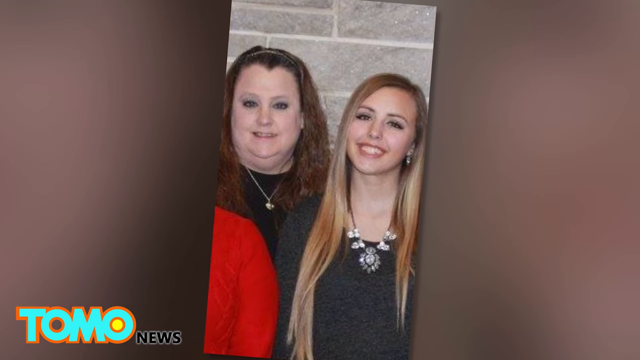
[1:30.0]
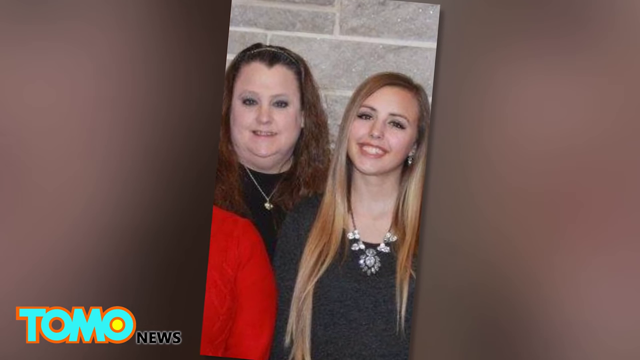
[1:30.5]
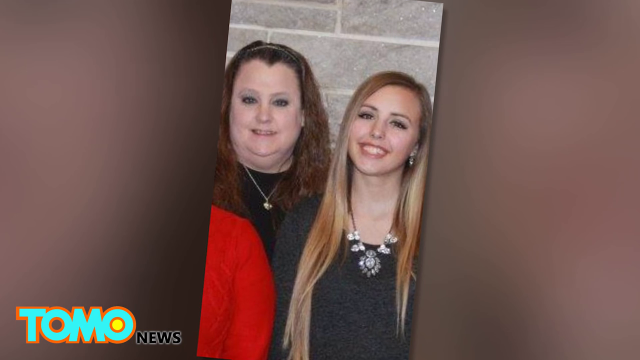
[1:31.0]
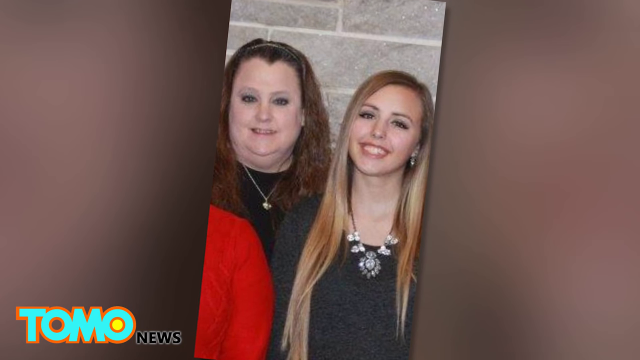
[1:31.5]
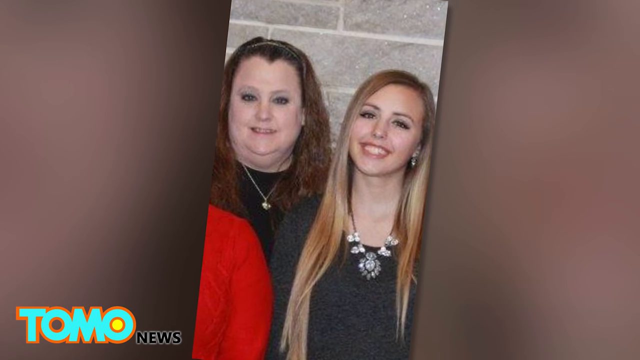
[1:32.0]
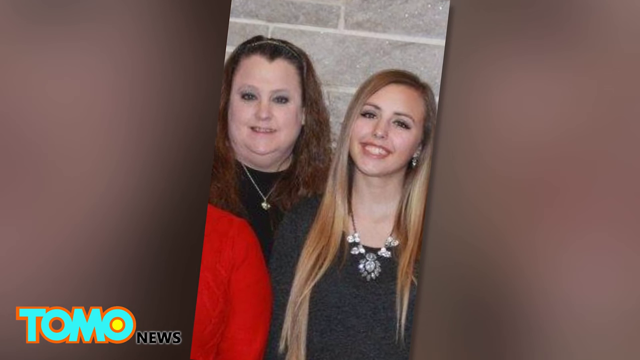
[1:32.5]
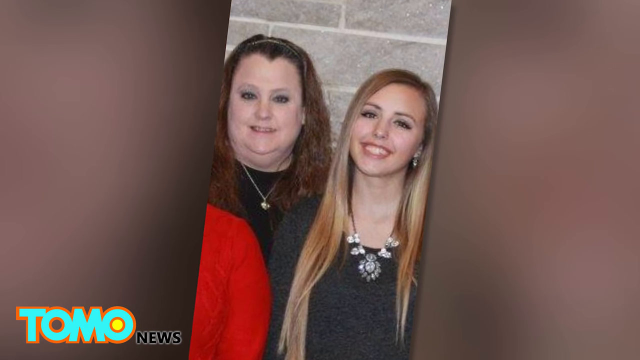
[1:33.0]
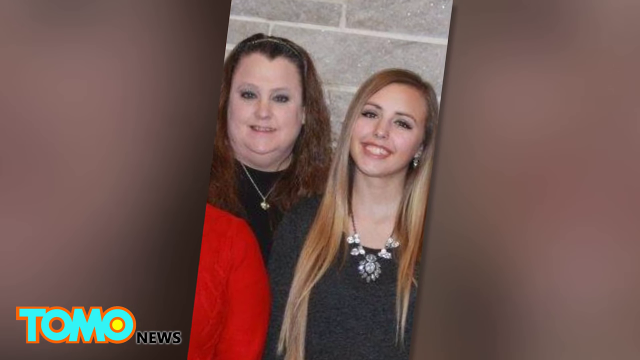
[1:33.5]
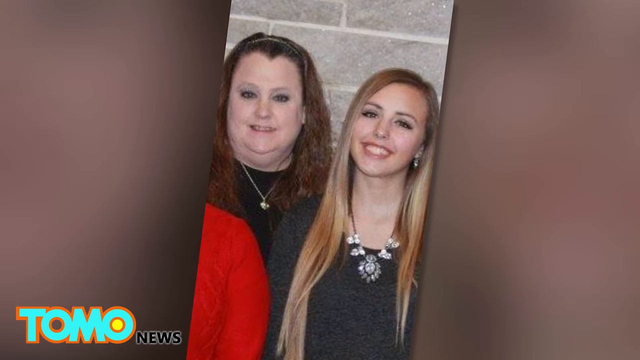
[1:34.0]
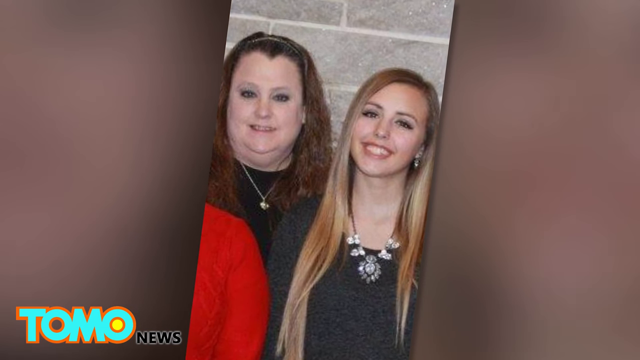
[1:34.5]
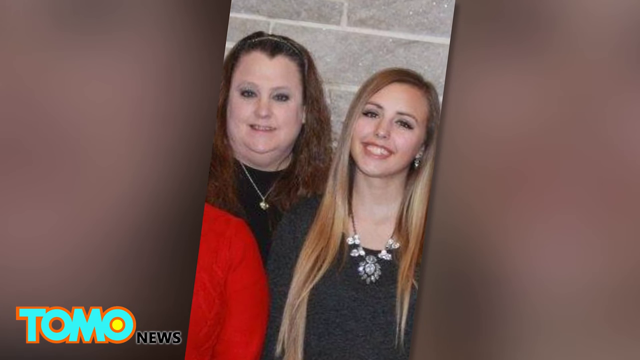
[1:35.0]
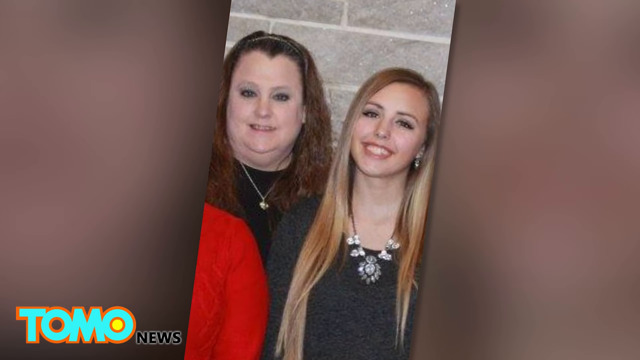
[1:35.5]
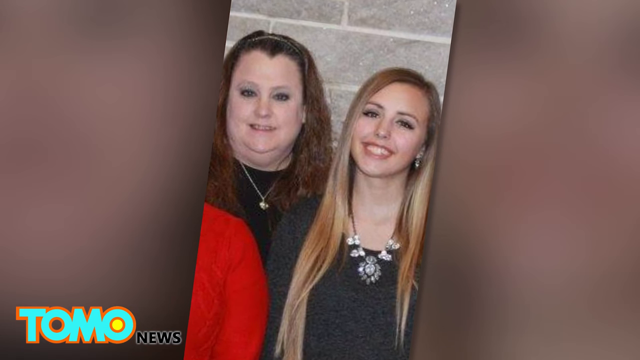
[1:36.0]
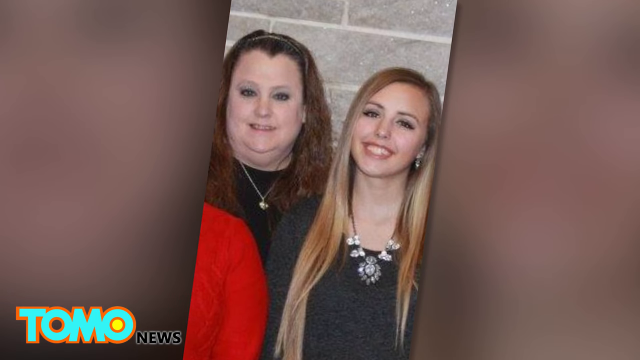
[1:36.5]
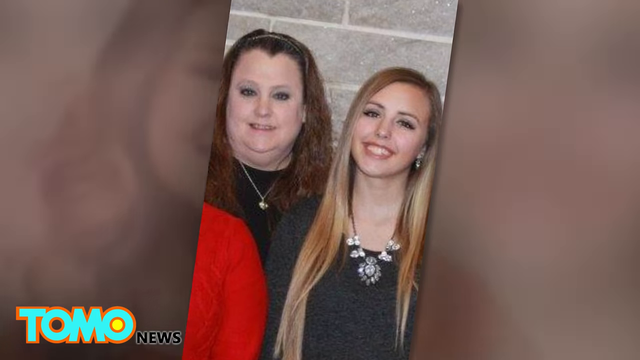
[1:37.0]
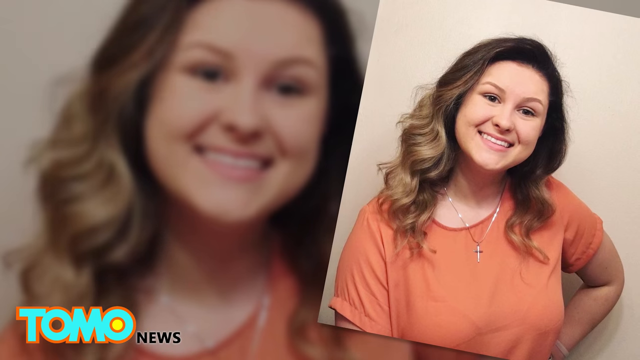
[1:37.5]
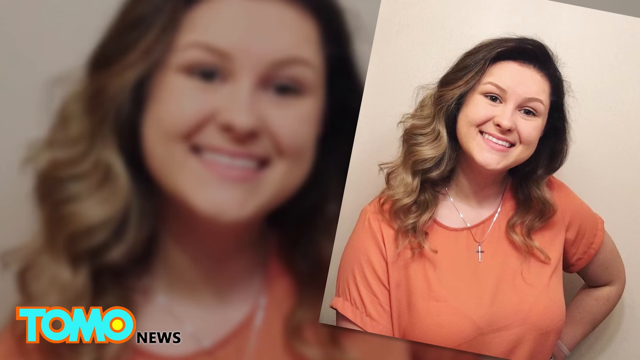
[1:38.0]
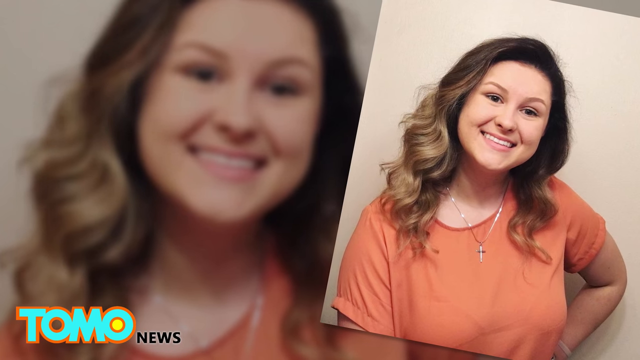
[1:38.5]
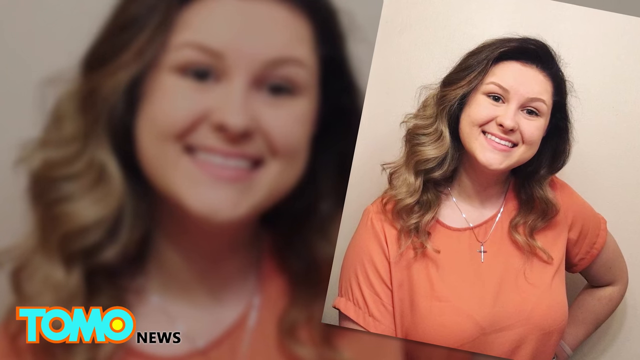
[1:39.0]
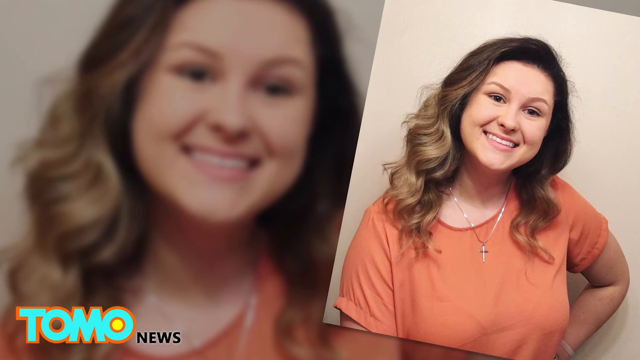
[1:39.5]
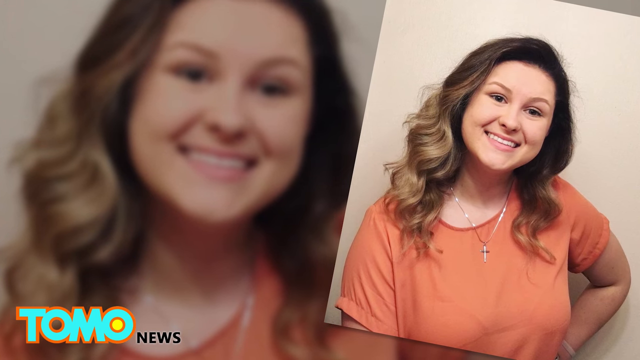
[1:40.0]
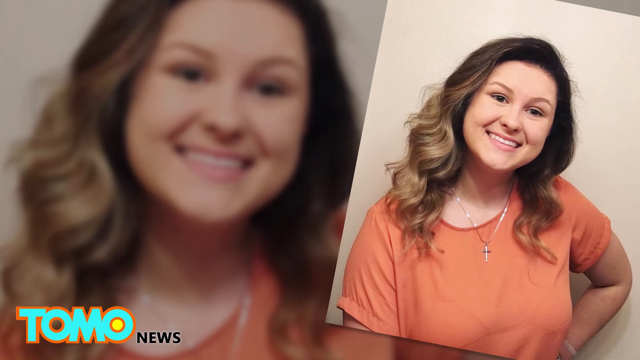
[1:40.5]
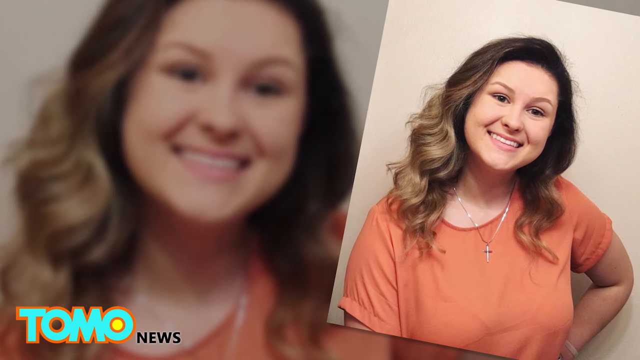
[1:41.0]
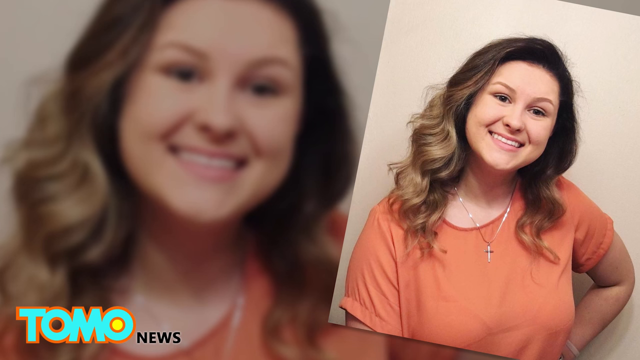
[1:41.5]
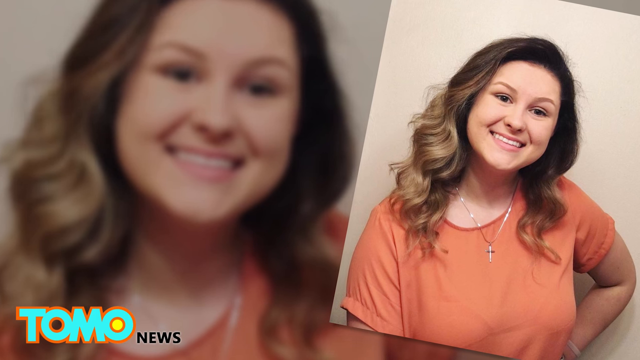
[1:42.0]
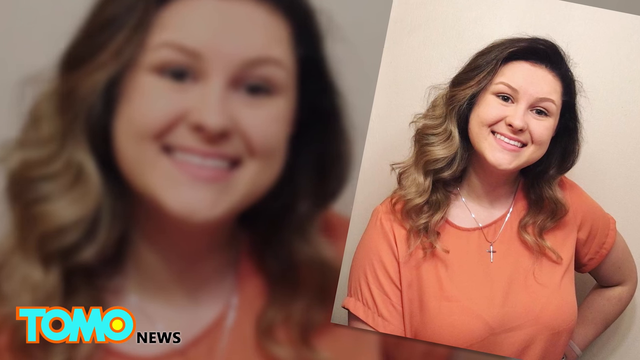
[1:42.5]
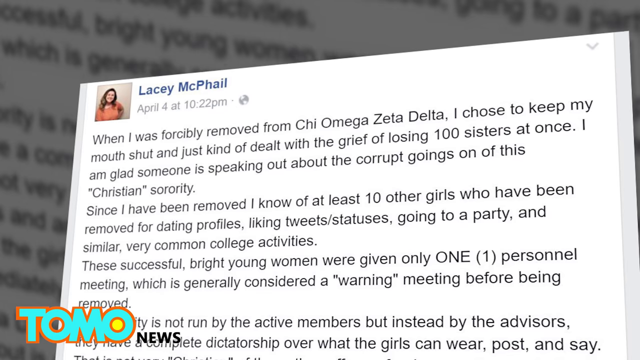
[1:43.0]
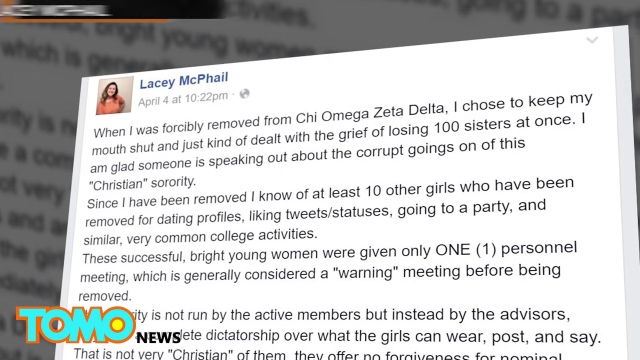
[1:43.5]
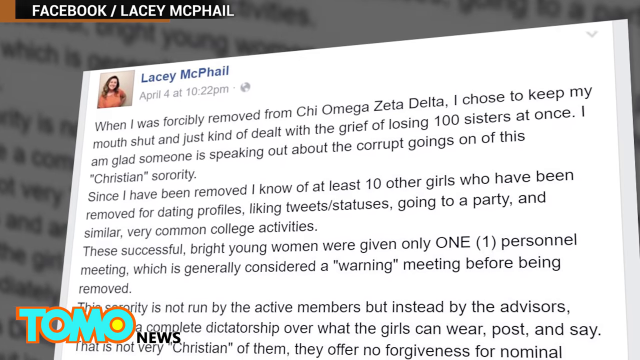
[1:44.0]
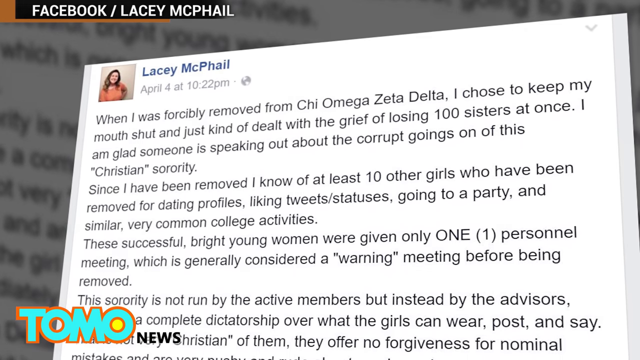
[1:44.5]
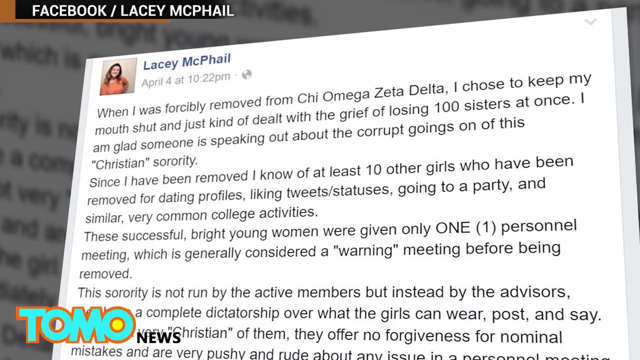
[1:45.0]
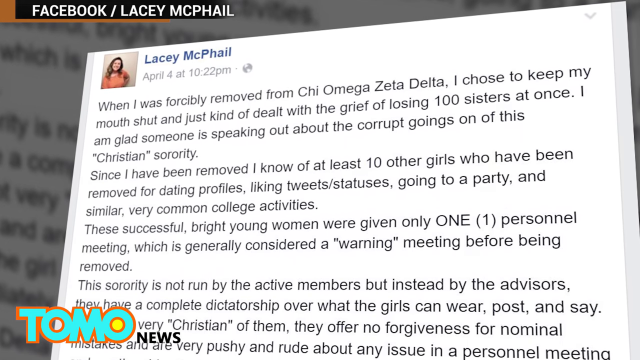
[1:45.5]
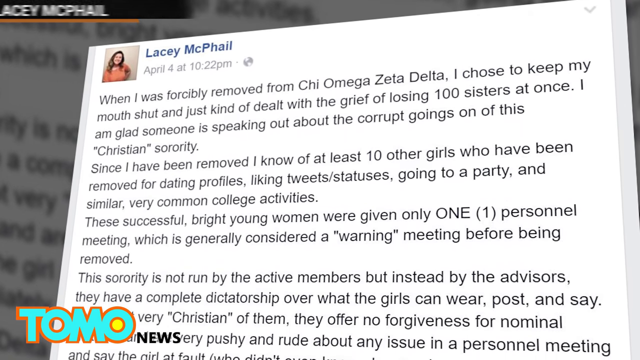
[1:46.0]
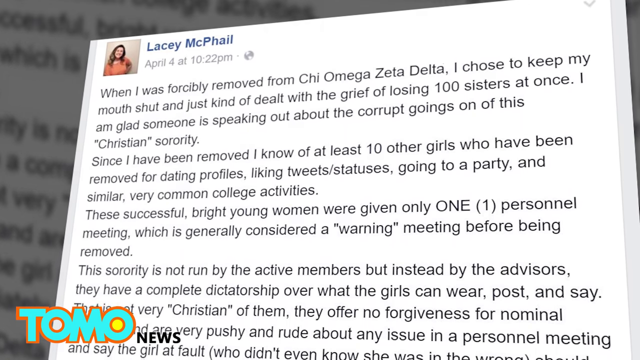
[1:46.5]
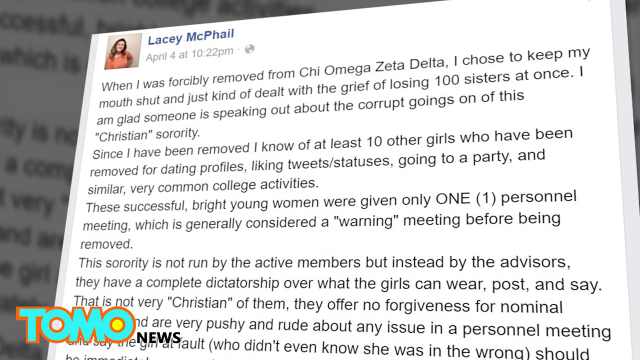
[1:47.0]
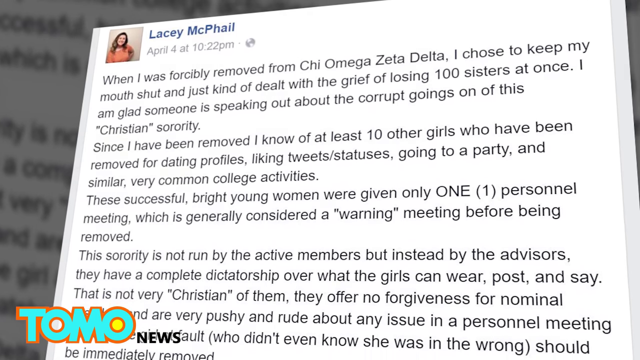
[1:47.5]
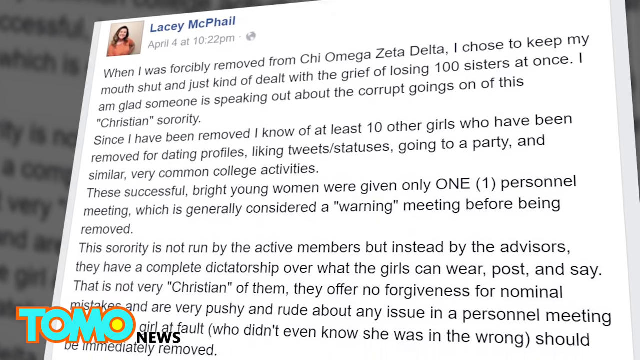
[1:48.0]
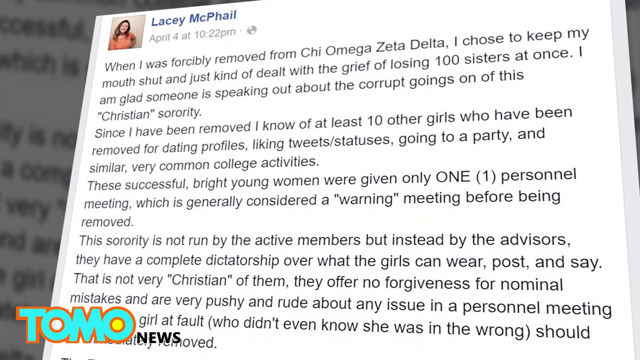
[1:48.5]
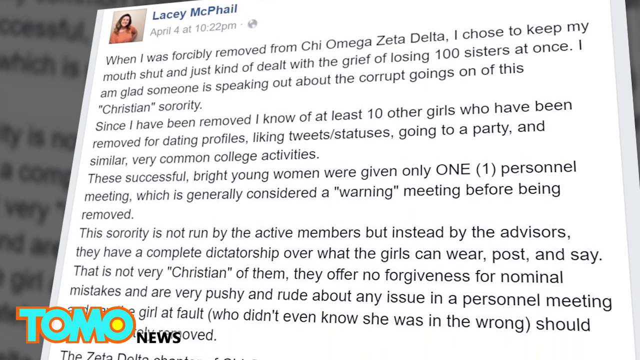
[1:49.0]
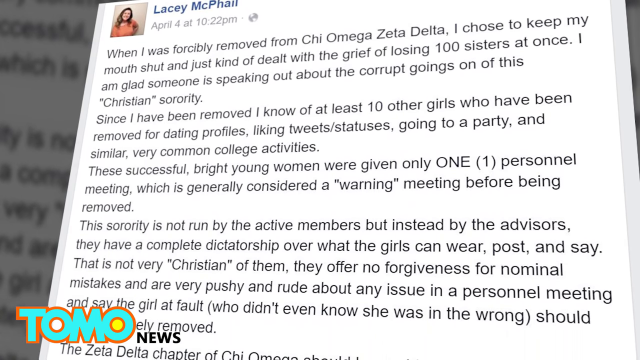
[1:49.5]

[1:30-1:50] A still photograph shows a mom with her daughter; the mother is overweight, and the daughter is very young, skinny and pretty. The video zooms in slightly on them, kind of turning a little to the right. Other shots follow of a woman smiling for the camera. A screenshot then shows a multi-line statement written by Lacey McPhail on a social media site, probably Facebook. The long statement appears to concern a controversy involving the Chi Omega sorority, described as faith-based, in which a hundred sisters disappeared; the girls apparently were kicked out of the sorority. The statement is shown alongside the photos of these people.